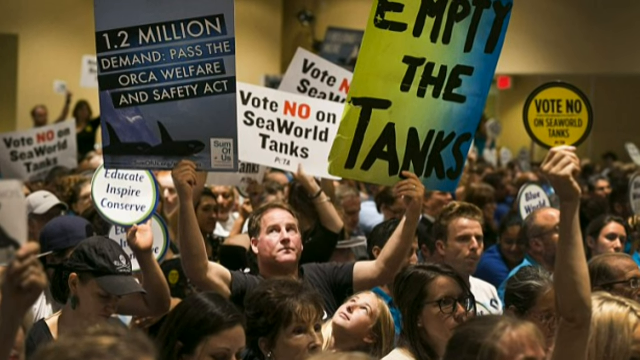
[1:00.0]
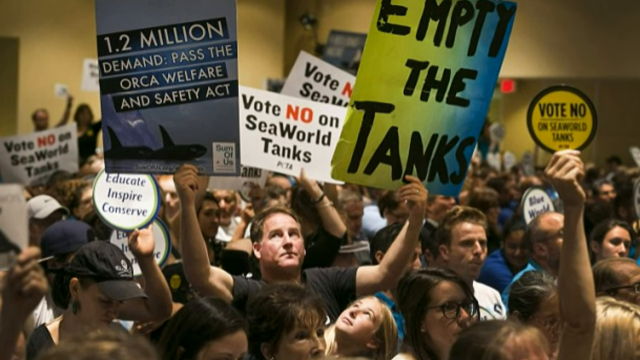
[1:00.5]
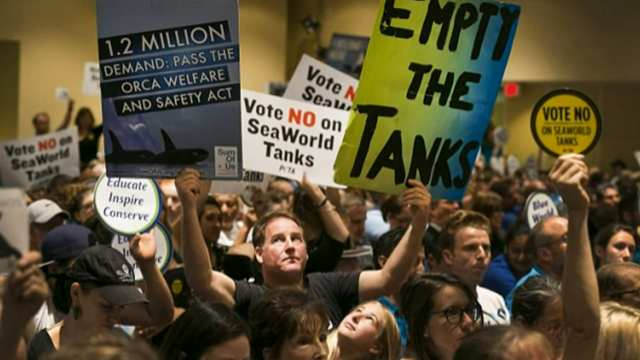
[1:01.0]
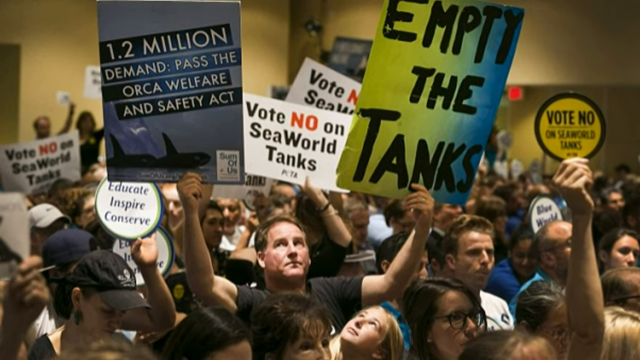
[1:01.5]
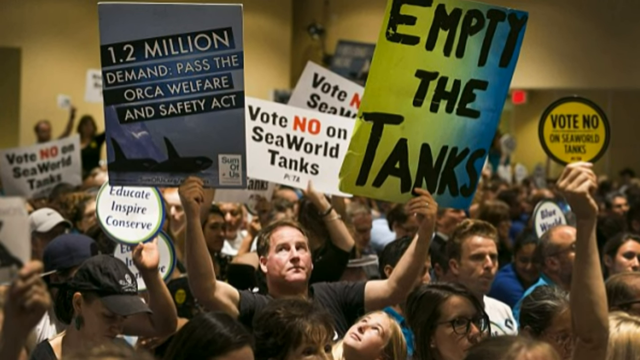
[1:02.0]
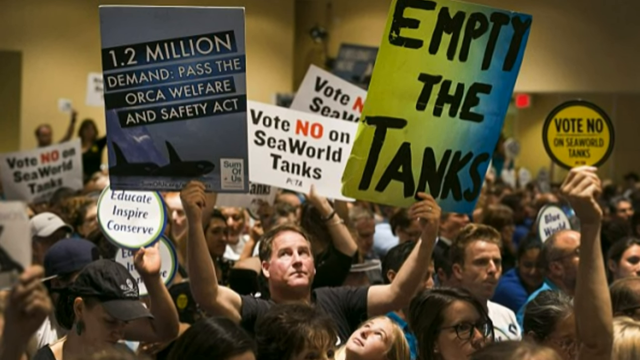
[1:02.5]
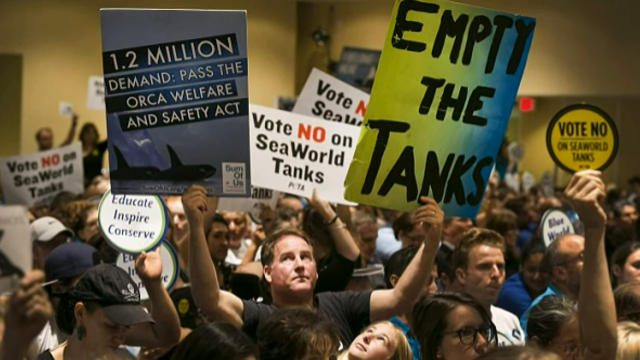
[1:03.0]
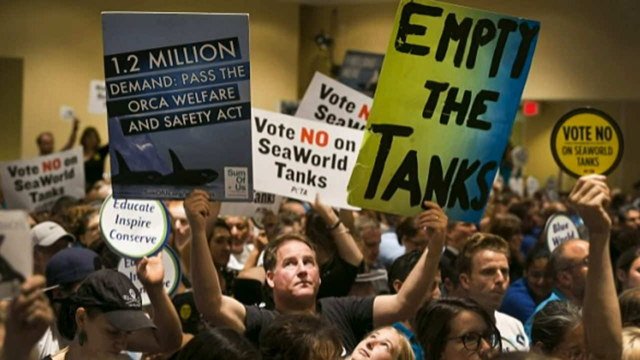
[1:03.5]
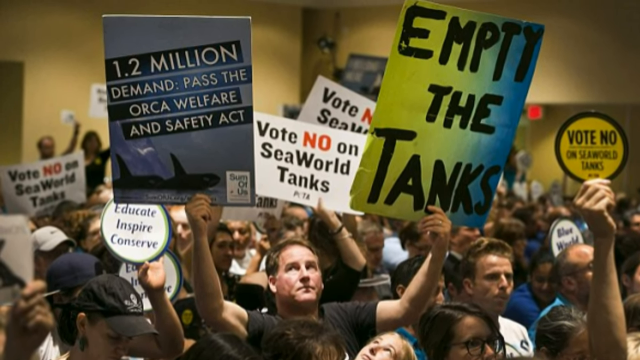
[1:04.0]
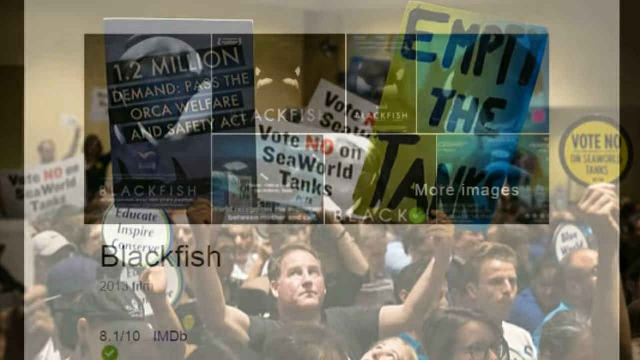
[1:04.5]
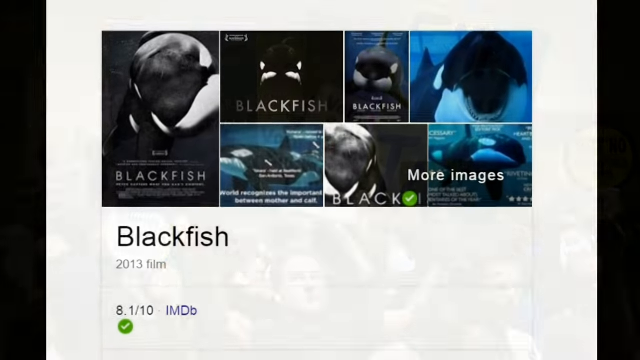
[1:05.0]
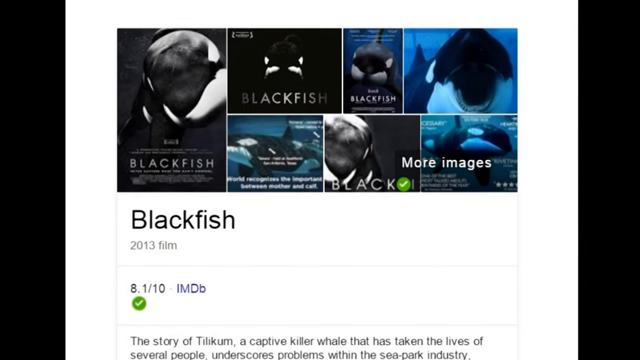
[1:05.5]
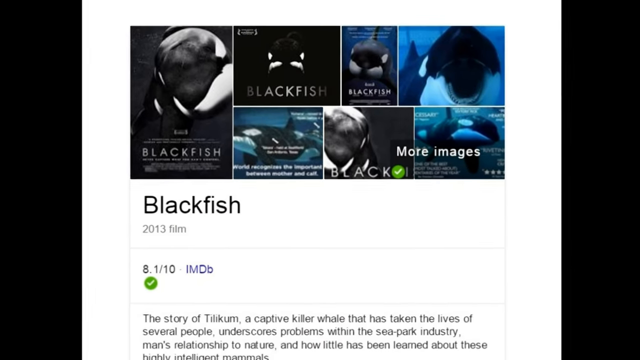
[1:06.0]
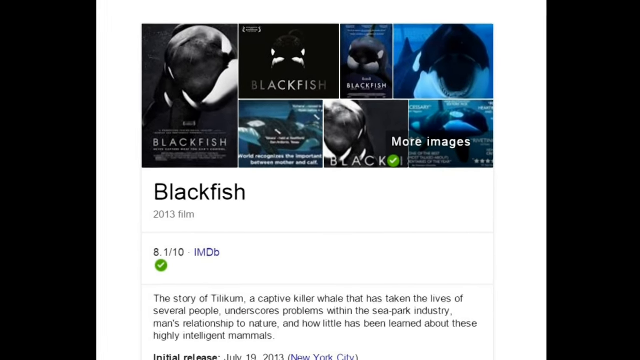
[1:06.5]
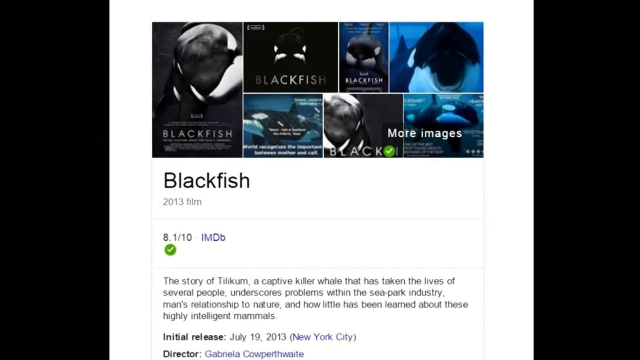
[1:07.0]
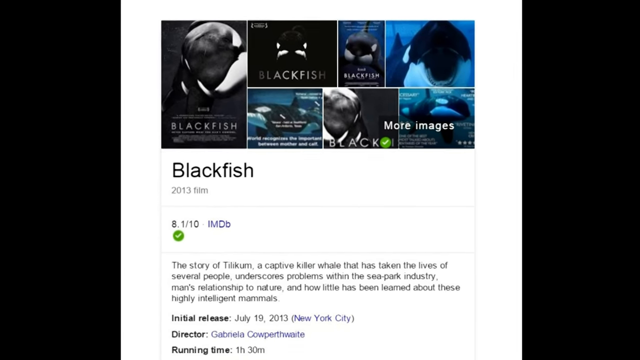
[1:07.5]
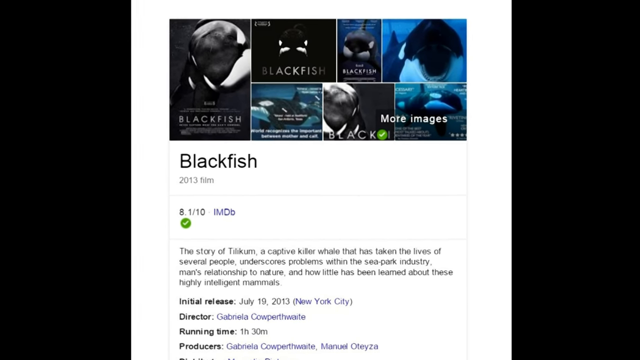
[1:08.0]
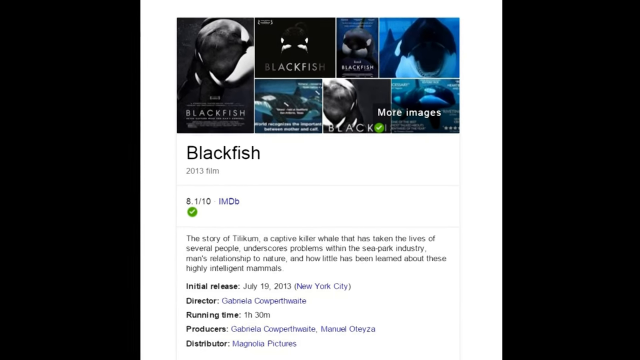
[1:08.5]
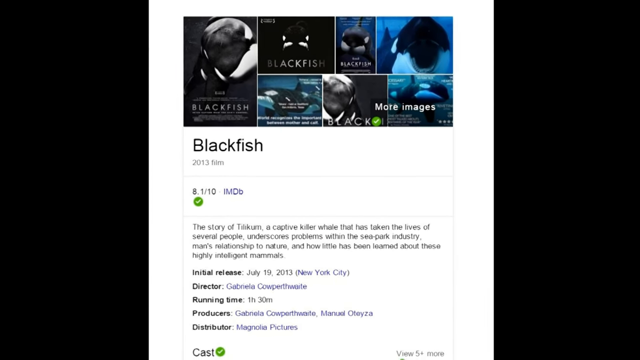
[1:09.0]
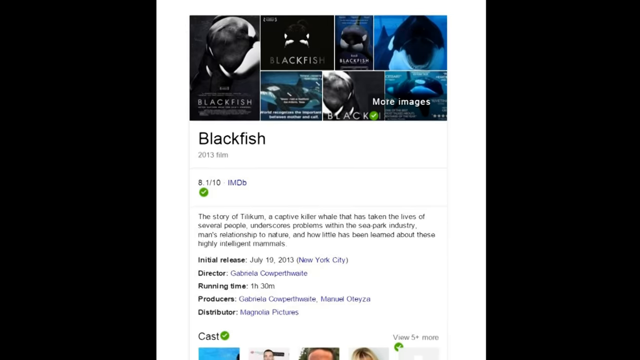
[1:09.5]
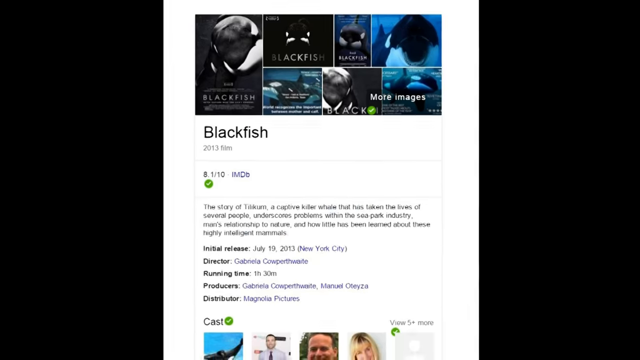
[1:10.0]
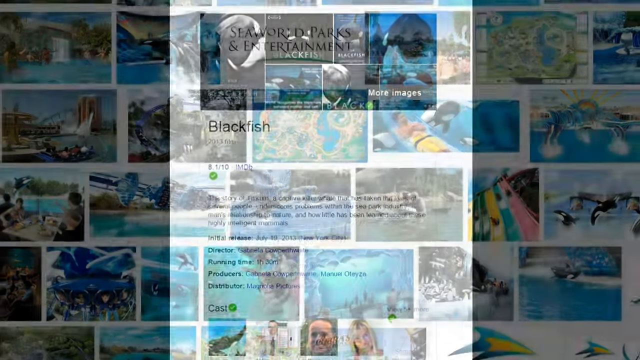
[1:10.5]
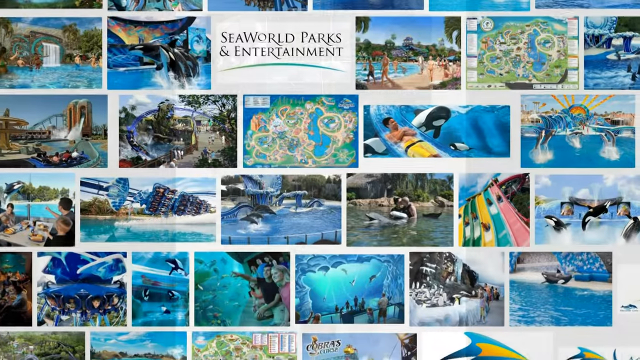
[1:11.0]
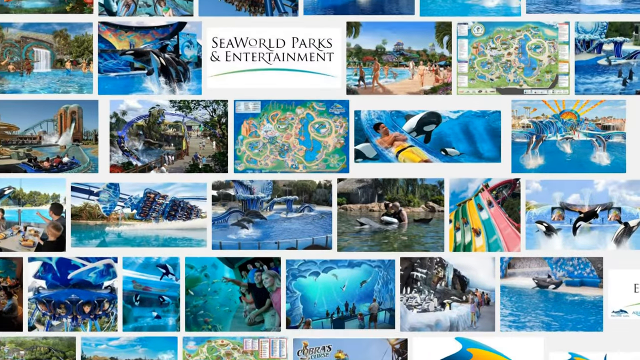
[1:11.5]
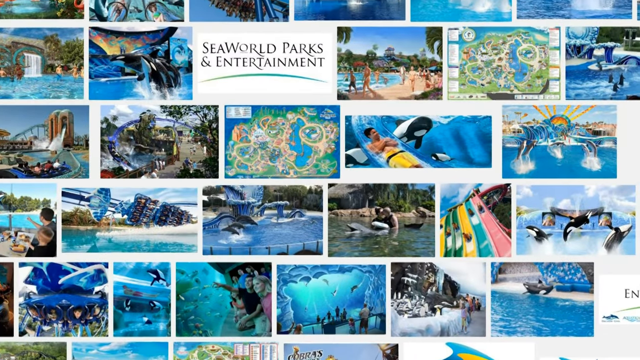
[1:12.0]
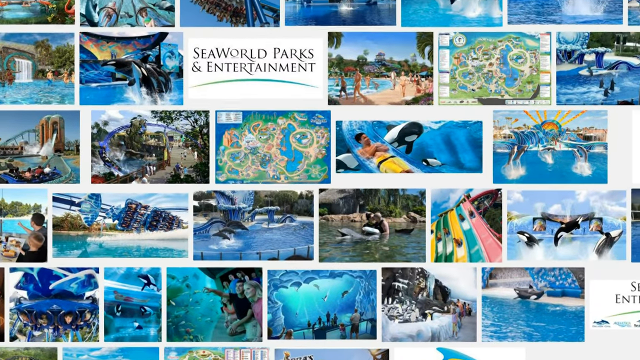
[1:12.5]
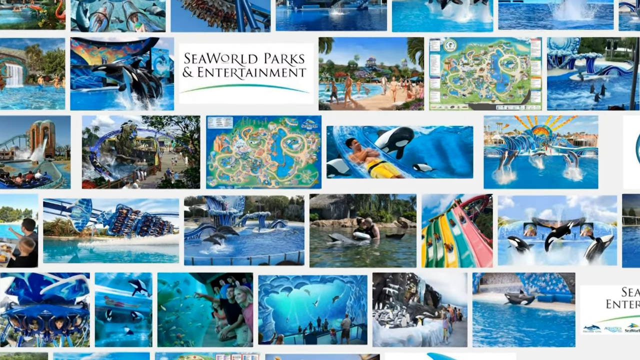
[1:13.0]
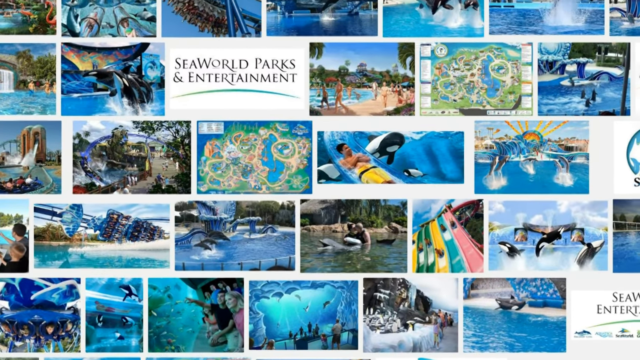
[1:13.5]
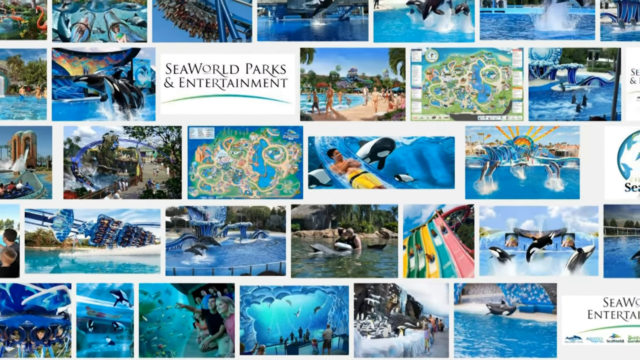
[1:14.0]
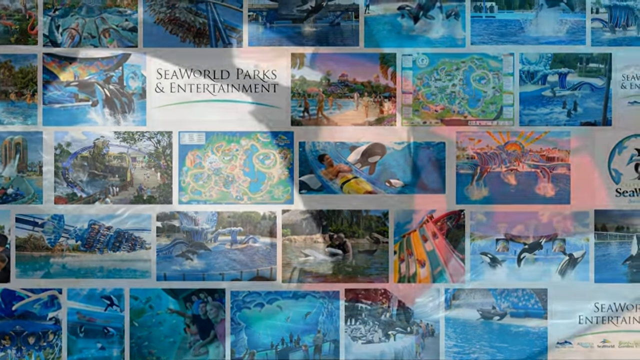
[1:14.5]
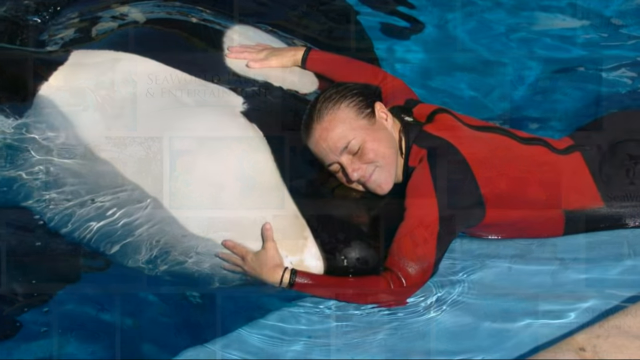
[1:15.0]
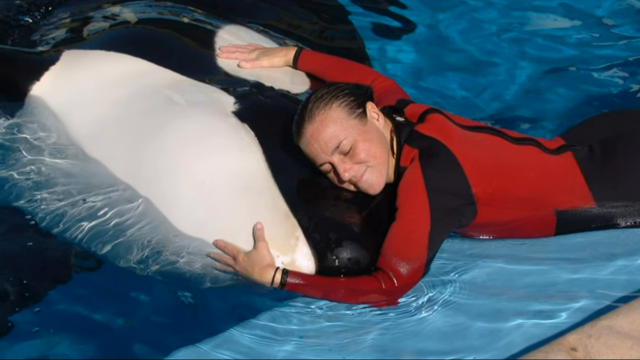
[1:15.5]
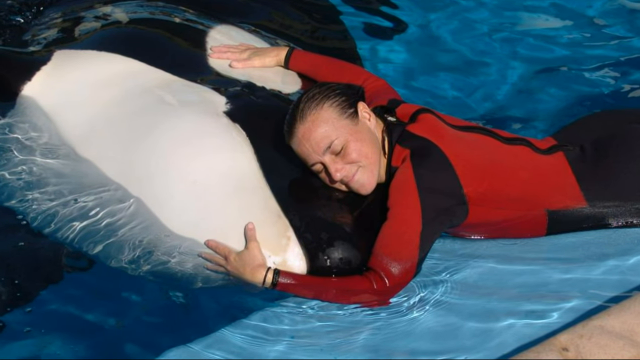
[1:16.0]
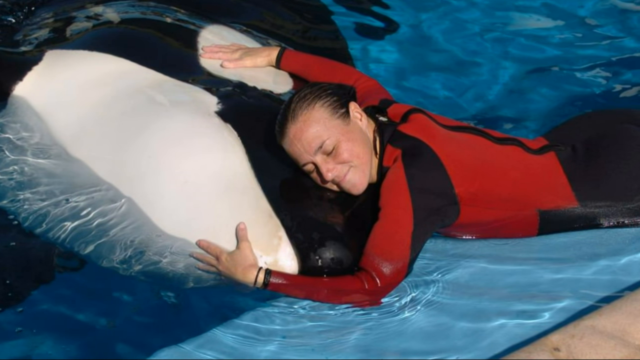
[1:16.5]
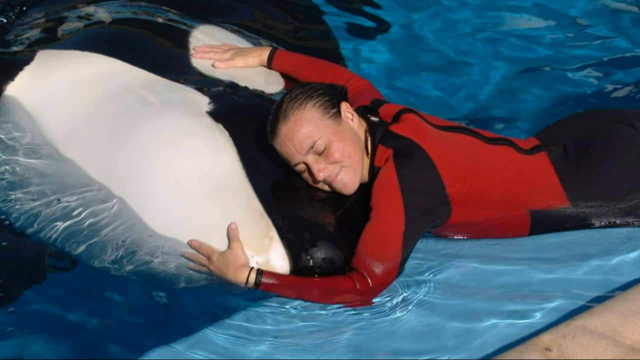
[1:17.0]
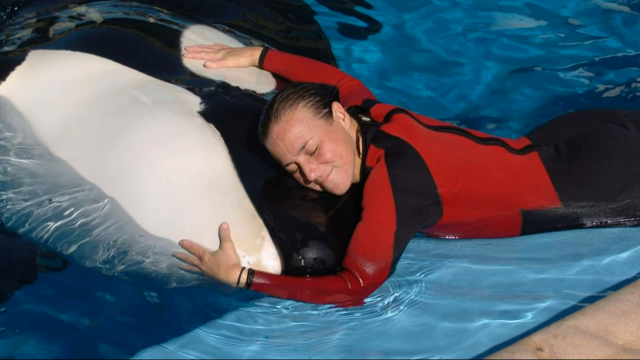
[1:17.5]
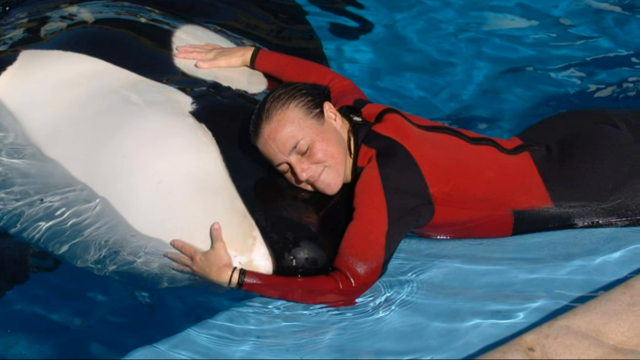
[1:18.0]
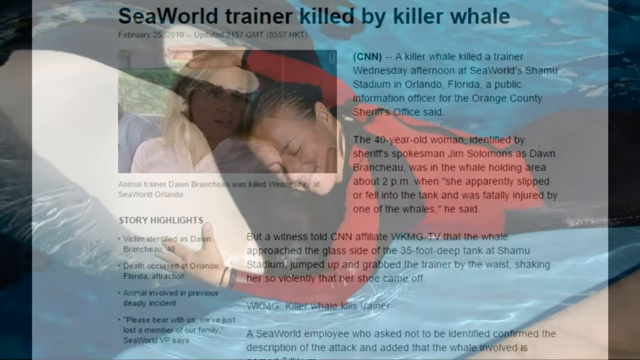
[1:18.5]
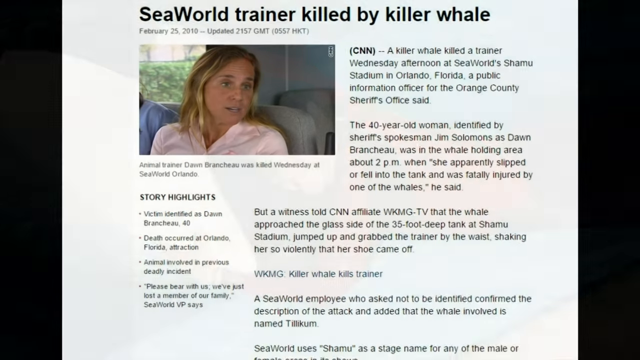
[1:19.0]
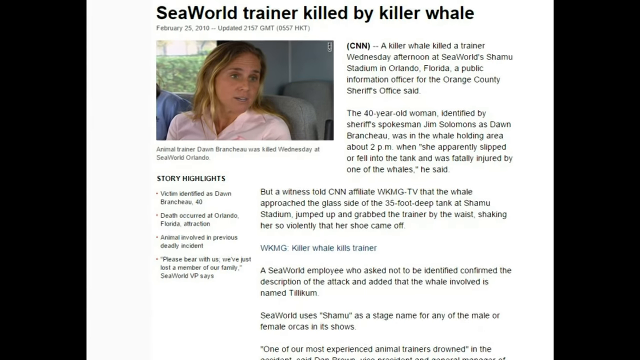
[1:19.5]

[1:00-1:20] Many people are demonstrating, and a man holds two placards with both hands while looking up. One placard says "1.2 million demand pass the Orca Welfare and Safety Act" in white text on a gray background with an image of two orcas. Another sign says "vote no on the seaworld tanks" on a white background, and another says "educate, inspire and conserve." Many people hold up placards as they demonstrate. The video transitions to a movie page on a website: the movie is Blackfish, a 2013 film rated 8.1 out of 10 on IMDb. The view zooms out to show the initial release date, the director and other information. Next comes a collage of images from Seaworld Parks and Entertainment on a white background. Then a woman in red and black swimming trunks lies on a giant black and white orca with both hands placed on it, both of them in a light blue river.